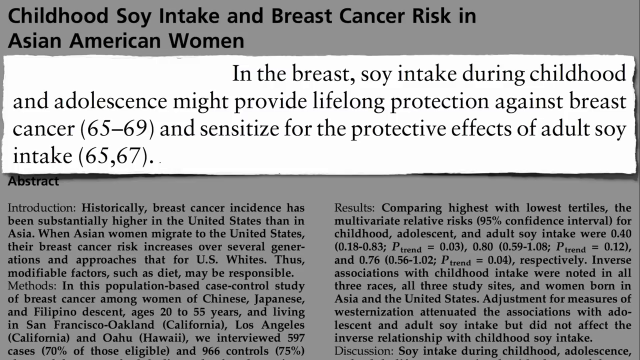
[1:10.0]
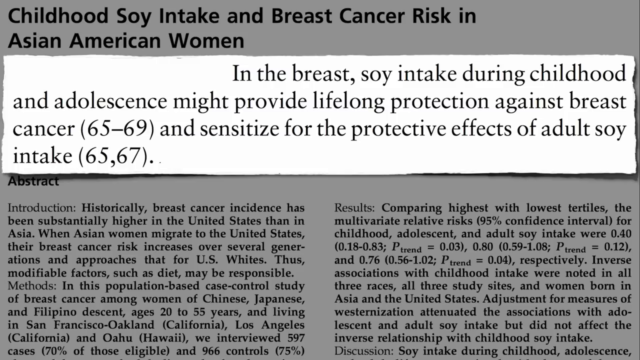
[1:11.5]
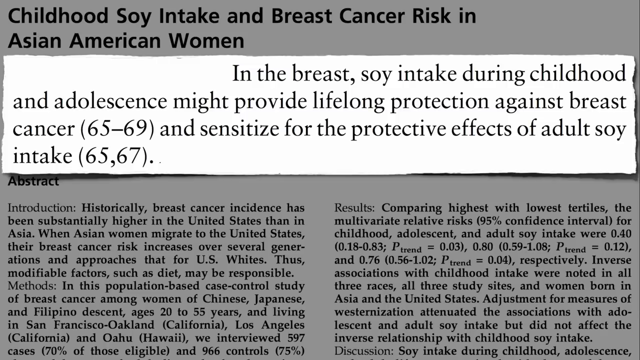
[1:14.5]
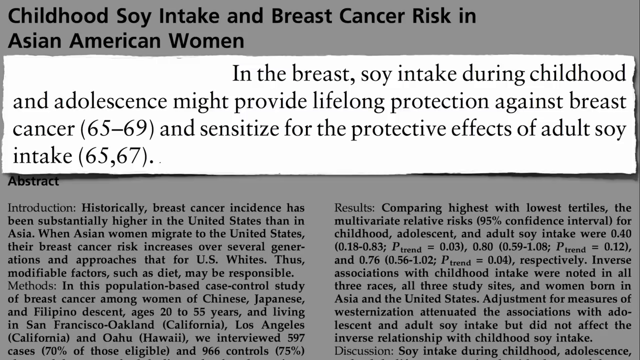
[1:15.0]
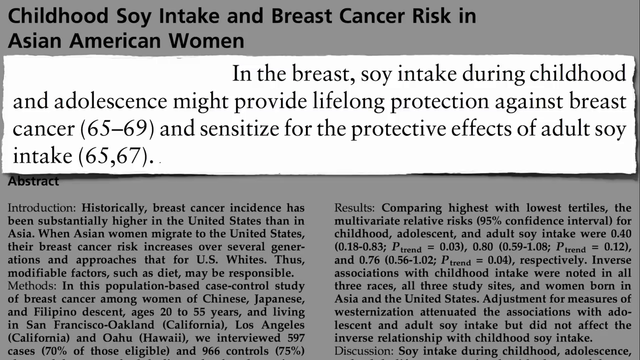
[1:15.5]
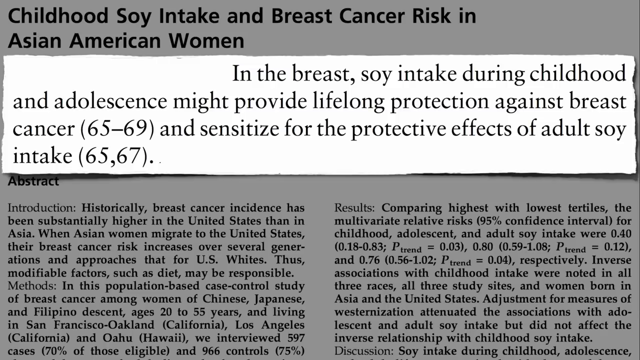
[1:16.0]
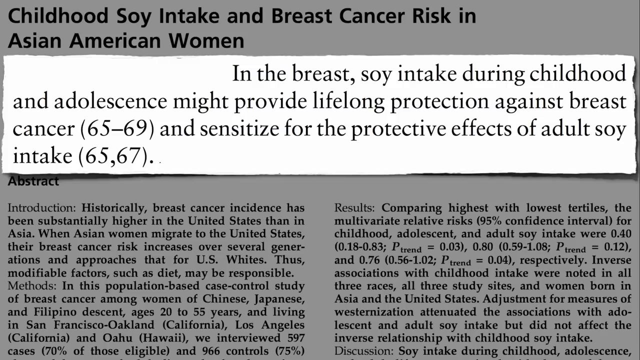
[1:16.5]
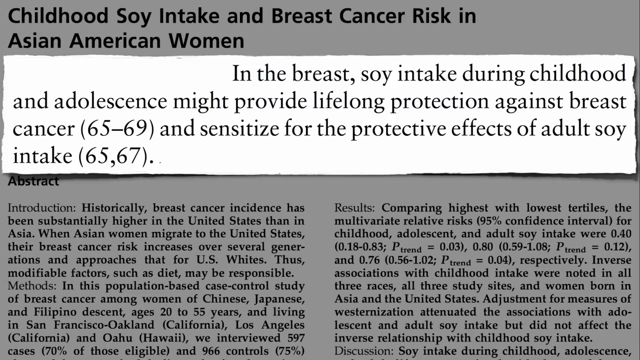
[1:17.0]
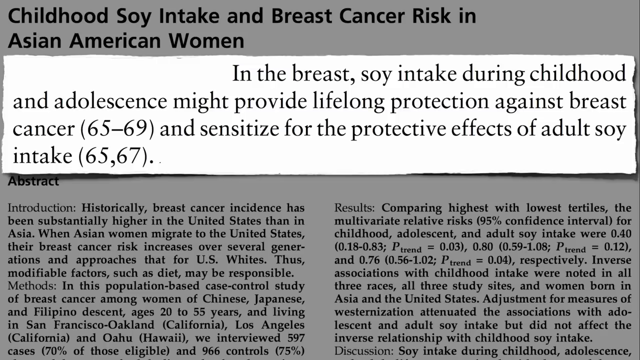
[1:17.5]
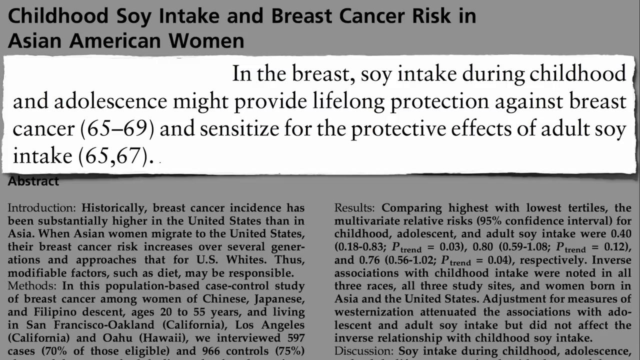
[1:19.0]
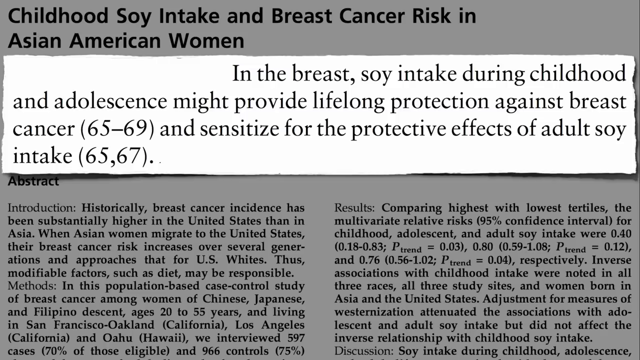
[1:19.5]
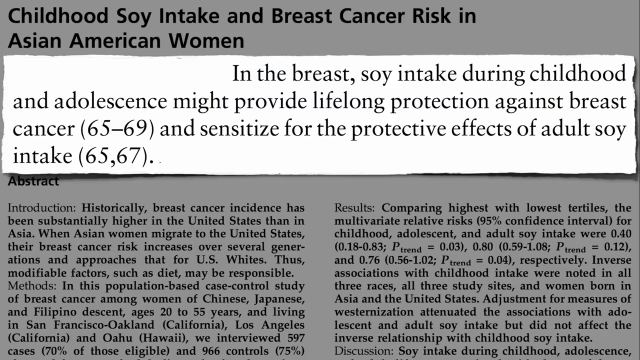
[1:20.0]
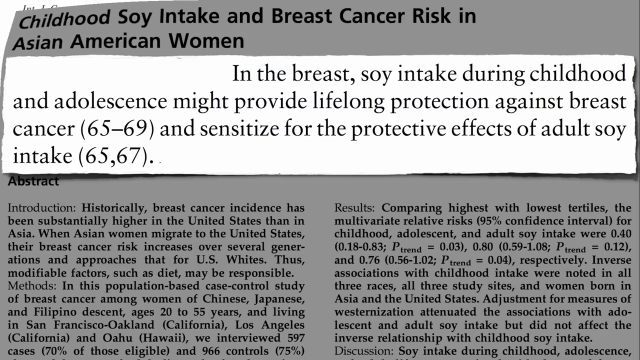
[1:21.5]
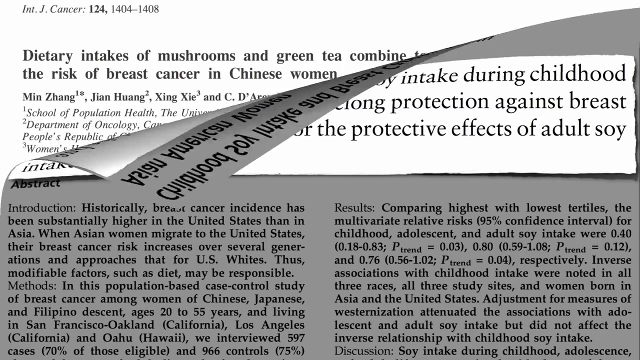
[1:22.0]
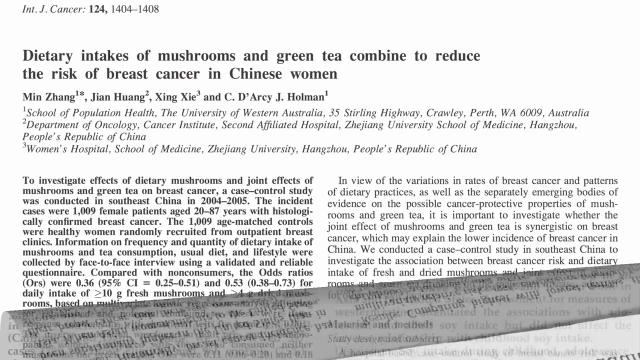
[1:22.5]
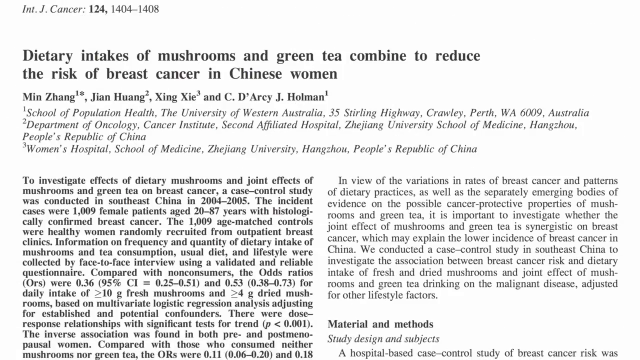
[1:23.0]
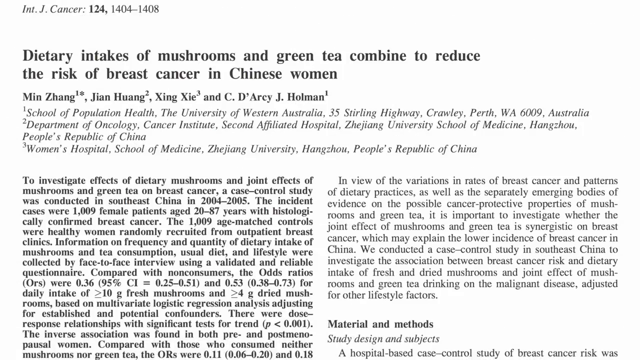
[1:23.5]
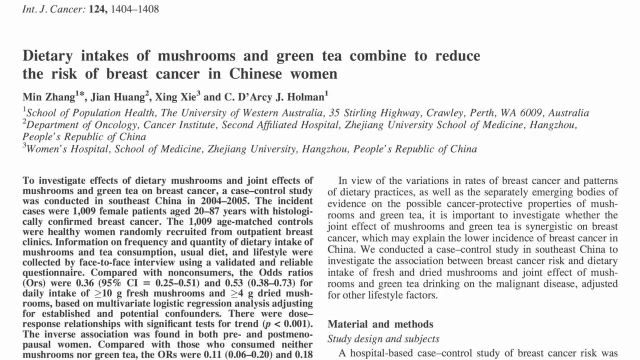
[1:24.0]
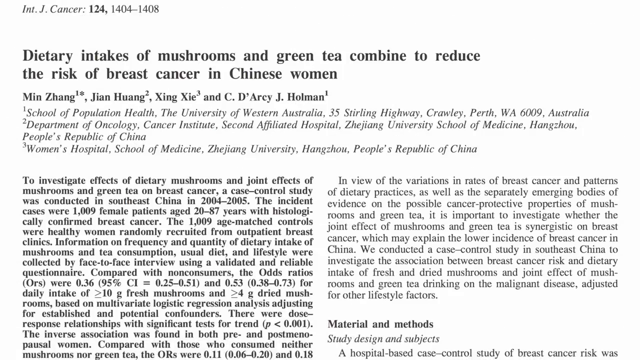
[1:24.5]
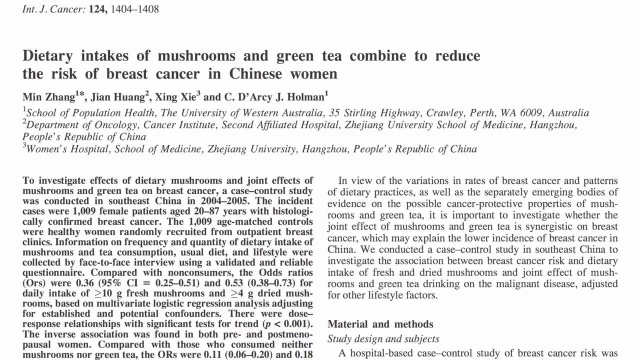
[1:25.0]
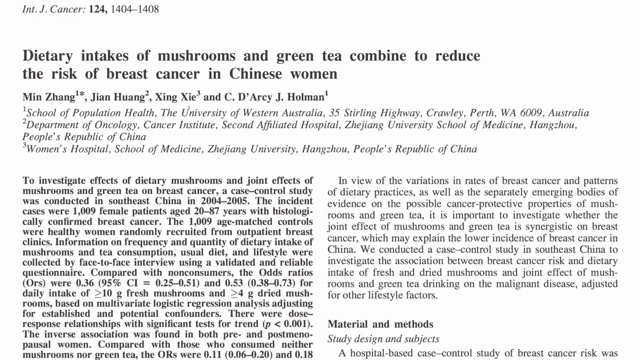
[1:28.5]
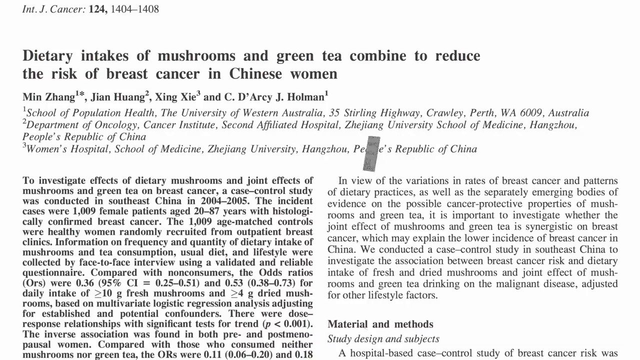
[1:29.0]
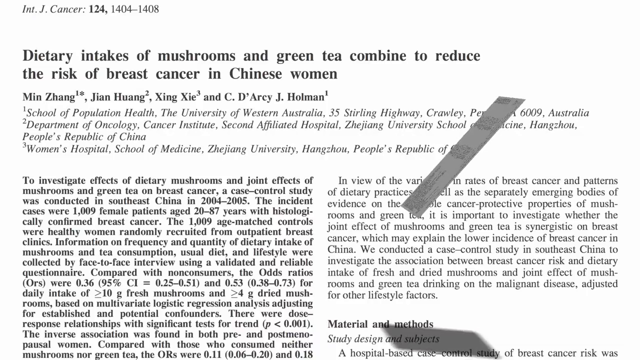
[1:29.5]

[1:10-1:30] The white background shows the article "childhood soy intake and breast cancer risk in Asian-American women", with the abstract's introduction on the bottom left side of the screen and the results on the bottom right side. Overlapping the authors of the article is a white rectangle with black text that says "in the breast, soy intake during childhood and adolescence might provide lifelong protection against breast cancer, 65 to 69, and sensitize for the protective effects of adult soy intake, 65, 67". The page stays for around 10 seconds, then a page turn transition begins in the top left-hand corner, the page folding down and moving off screen to reveal an article underneath that says "dietary intakes of mushrooms and green tea combine to reduce the risk of breast cancer in Chinese women". The list of authors and where they work follows, with two columns of the article, a large body of text, on the bottom half of the page. Another transition then appears from the middle of the screen, moving to the right as it enlarges and rotates round, to cover the full screen.